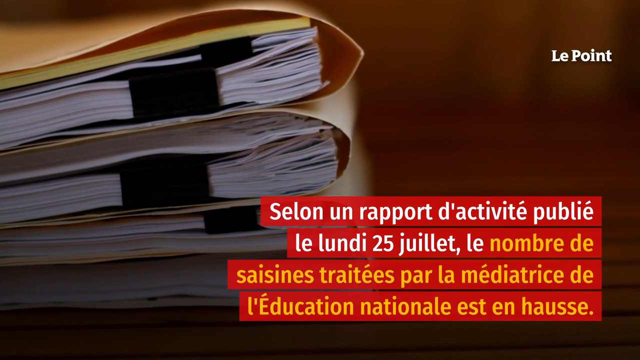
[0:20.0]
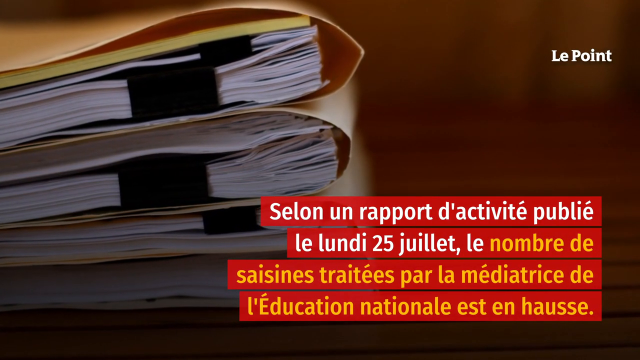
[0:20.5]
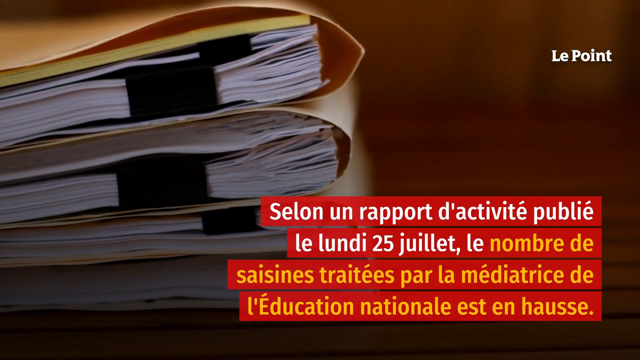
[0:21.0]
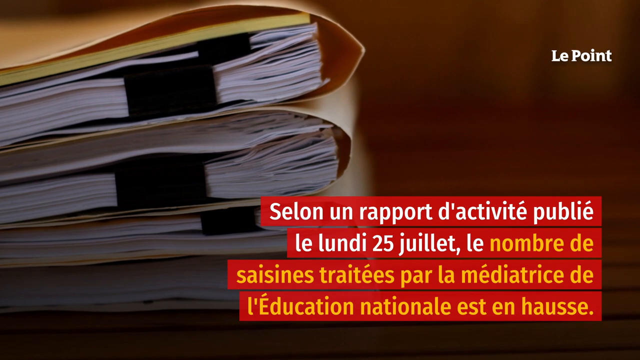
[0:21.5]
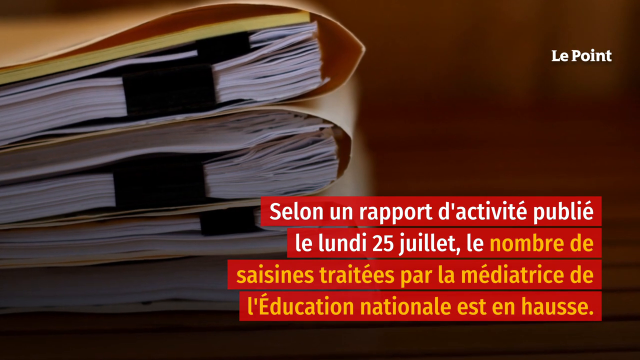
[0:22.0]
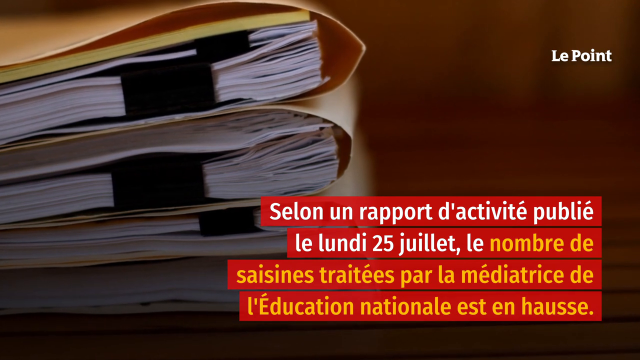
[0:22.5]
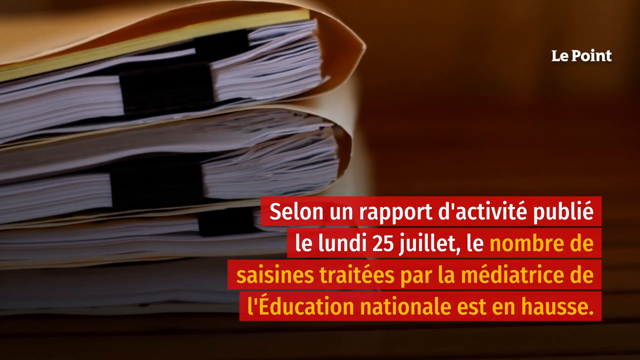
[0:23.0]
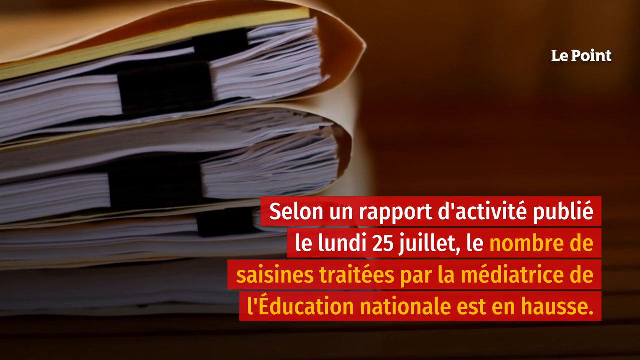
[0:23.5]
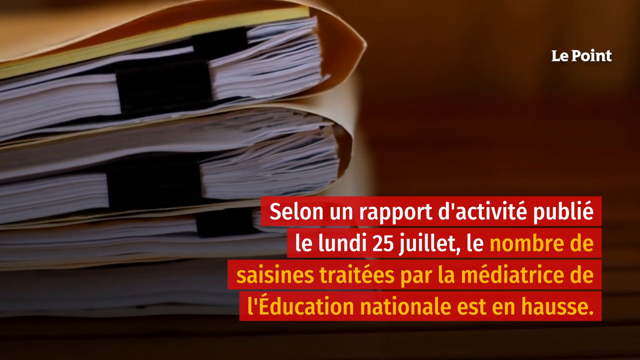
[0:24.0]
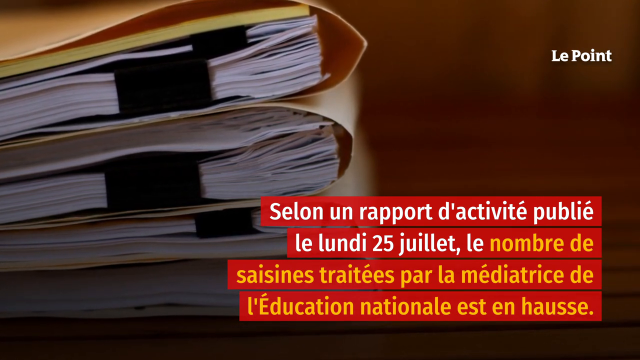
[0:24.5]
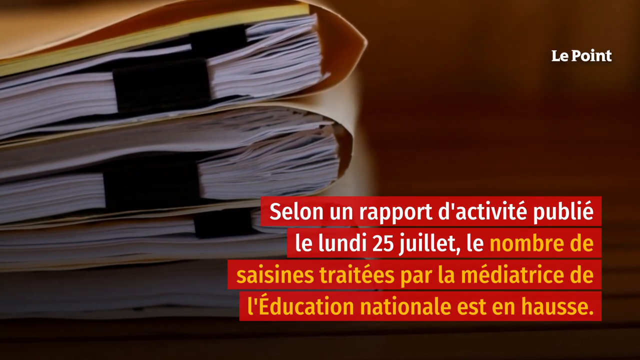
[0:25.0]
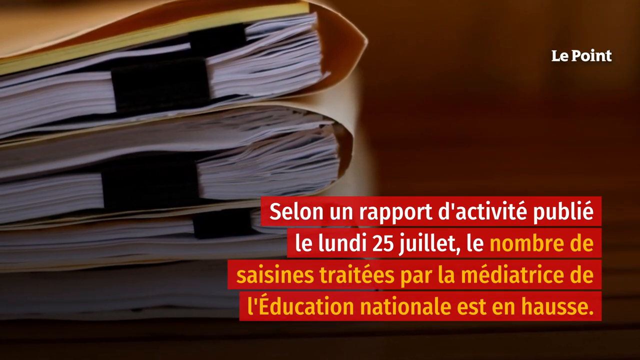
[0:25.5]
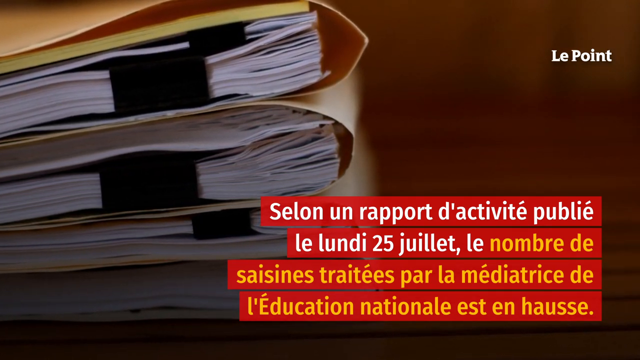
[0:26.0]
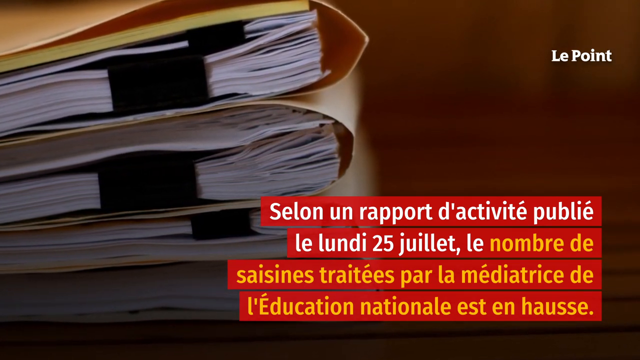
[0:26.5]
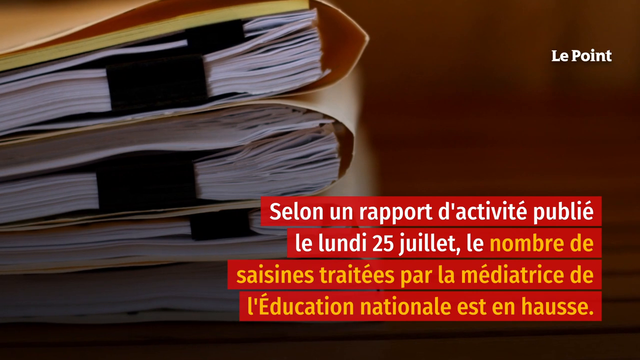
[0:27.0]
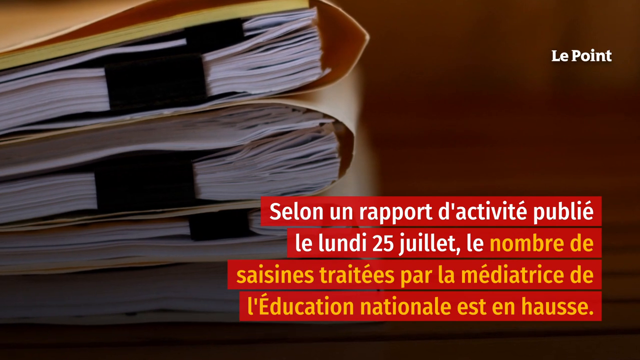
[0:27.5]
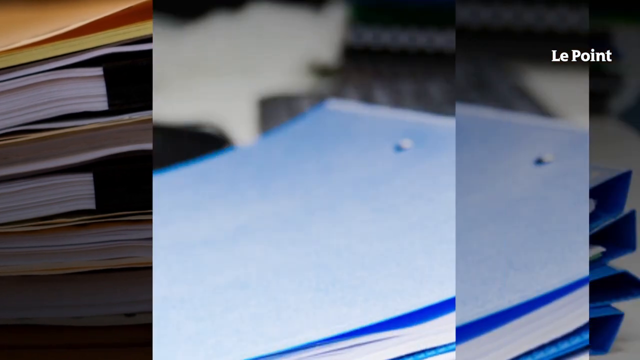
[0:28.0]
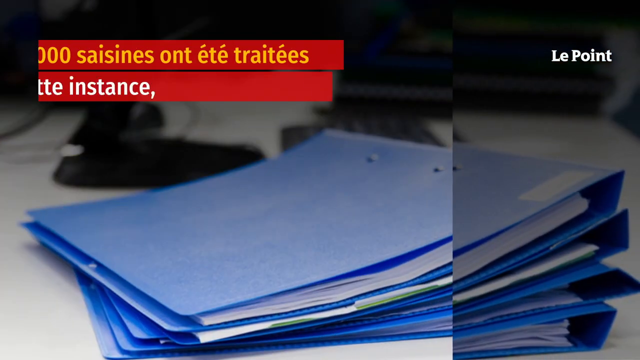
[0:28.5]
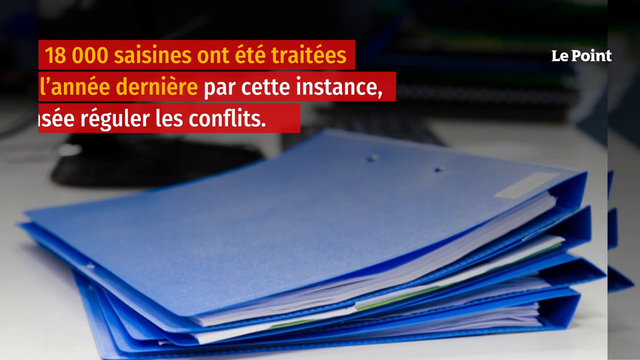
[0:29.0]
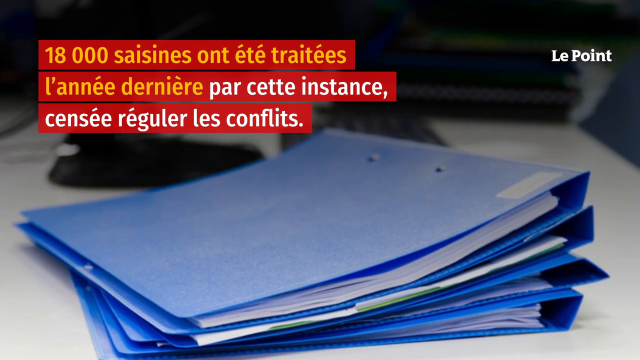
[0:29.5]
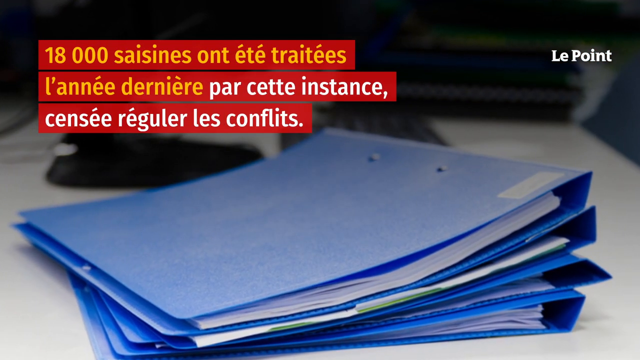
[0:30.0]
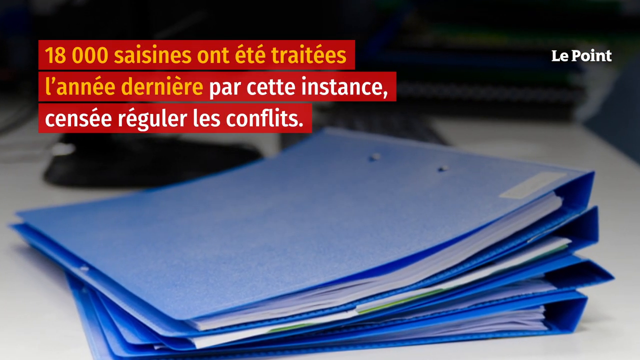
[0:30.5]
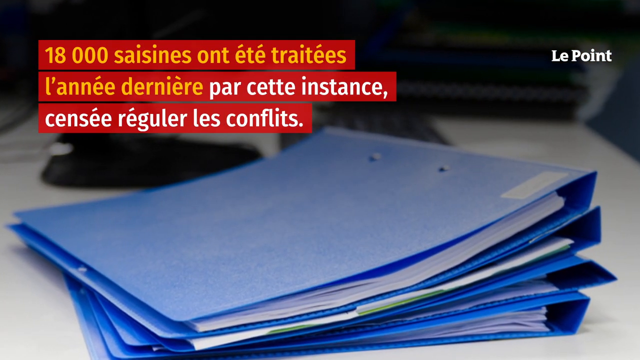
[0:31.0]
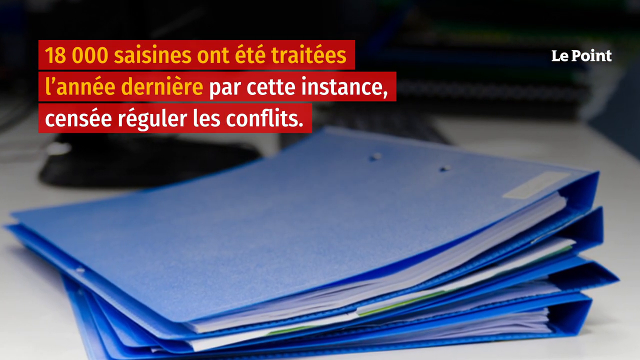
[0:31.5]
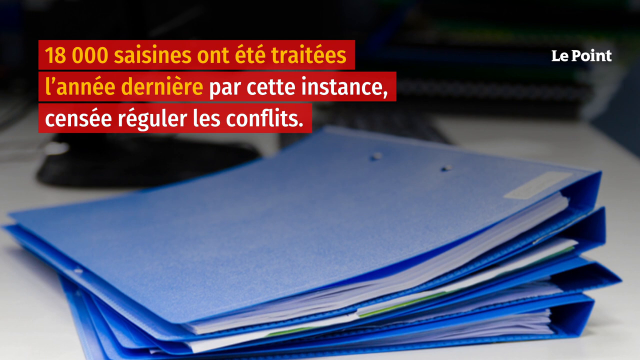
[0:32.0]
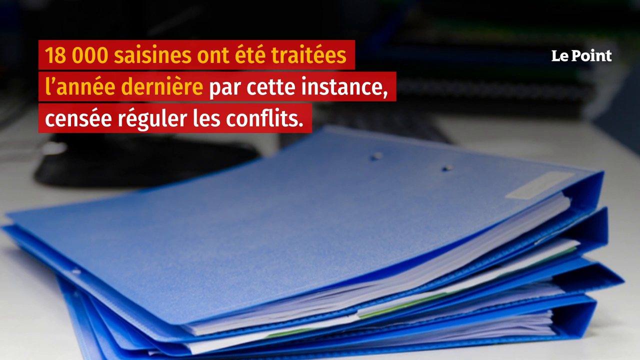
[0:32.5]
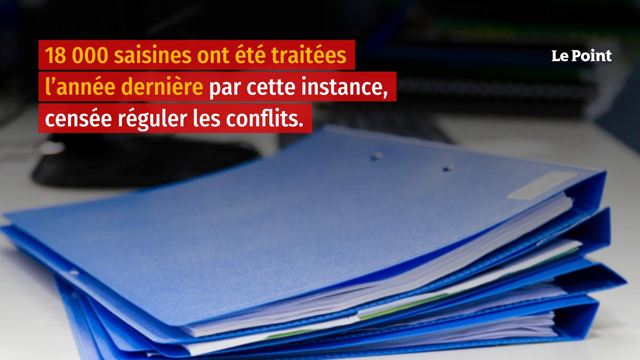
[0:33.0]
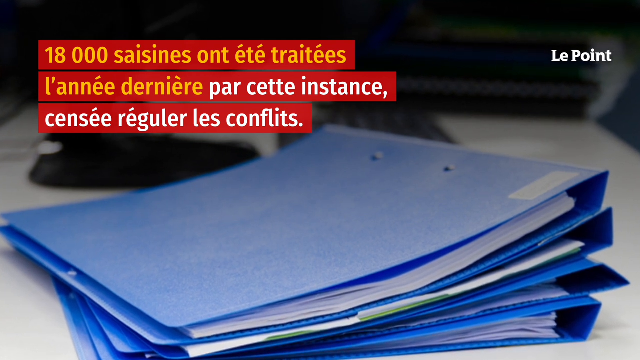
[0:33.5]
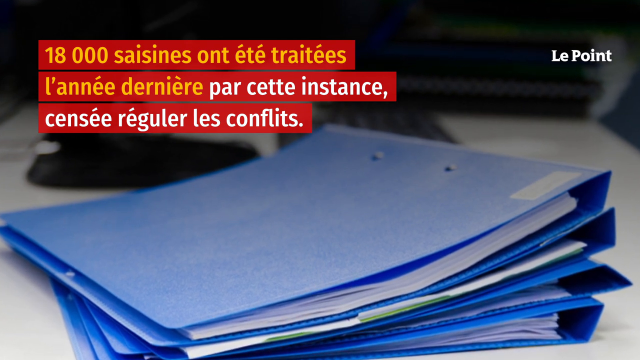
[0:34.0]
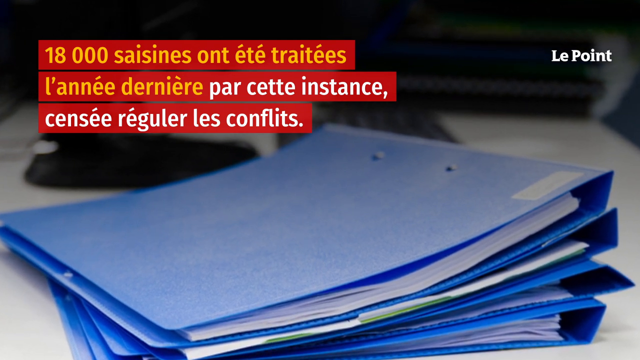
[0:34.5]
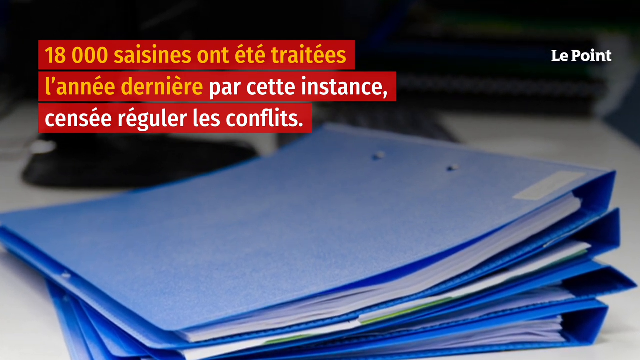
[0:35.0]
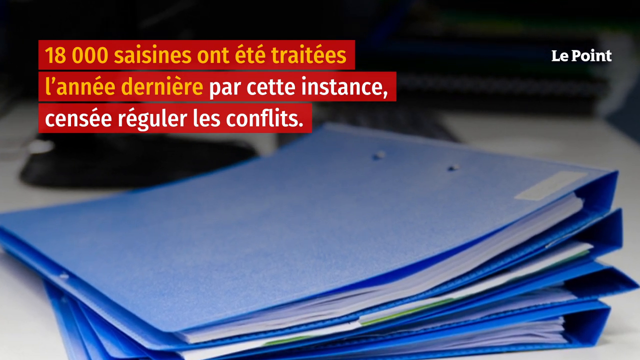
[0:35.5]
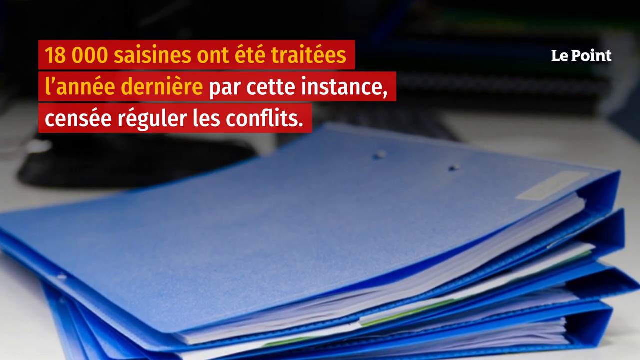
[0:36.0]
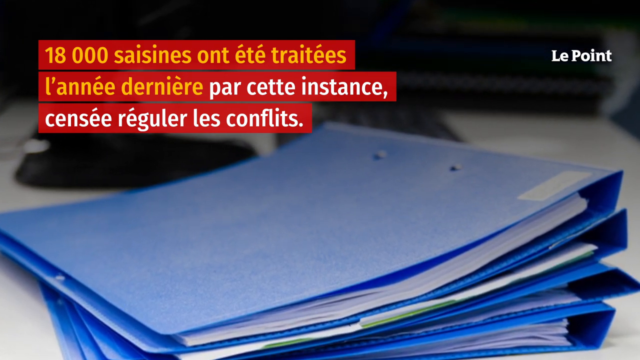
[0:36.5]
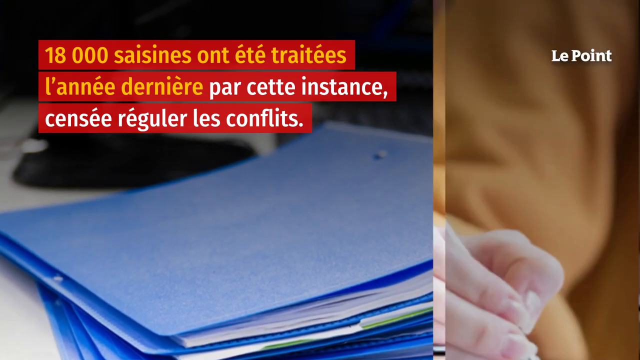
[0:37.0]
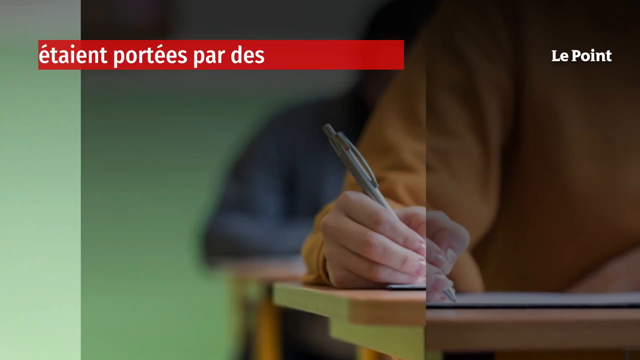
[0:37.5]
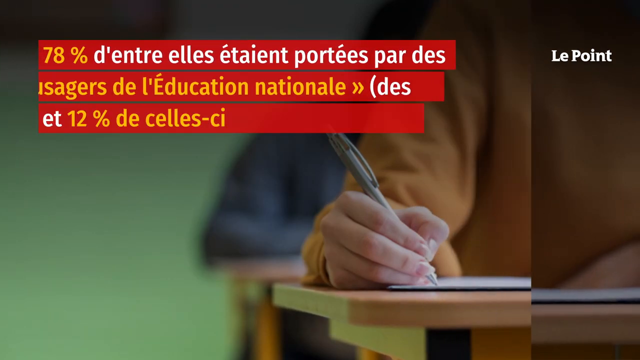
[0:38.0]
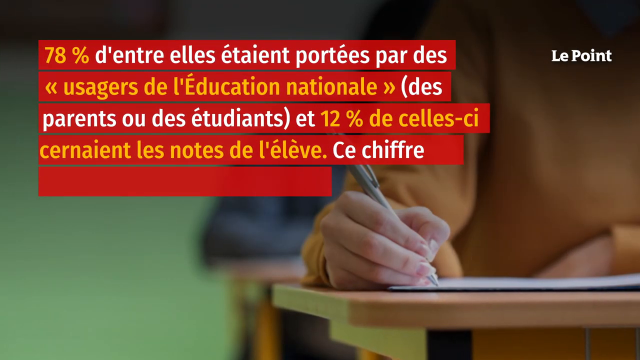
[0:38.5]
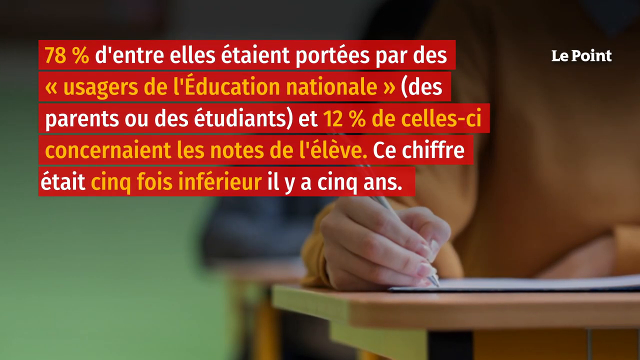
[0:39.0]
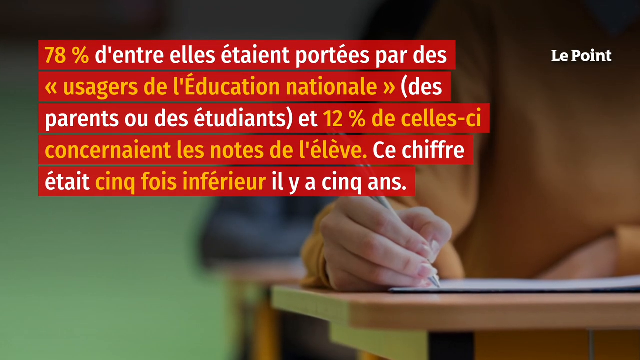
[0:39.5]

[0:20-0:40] Manila folders filled with papers are shown in stacks of varying sizes. Two of them have the really big paper clips and two have smaller ones, and another looks like it has a yellow legal pad in it. They are all stacked together, and everything outside the stacks is kind of blurry. Text that is not in English appears. The picture then switches to blue folders with actual spines and papers in them; they appear to be on some type of desk, and the shot is zoomed in on the folders. More text appears in the red banner, this time orange in the top half and white in the bottom. In the right-hand corner the words "La Pointe" pretty much stay on screen the whole time. The camera slowly kind of zooms in. The picture then switches to a close-up of somebody sitting at a desk, holding a pen on a piece of paper. Their face is not visible; they look Caucasian and wear an orange sweater. Another student is at a desk behind them but is very blurry. The red text banner pops up again, starting with "78%" in orange, followed by sentences alternating in white and orange: white, orange, white, orange, white, orange, white.